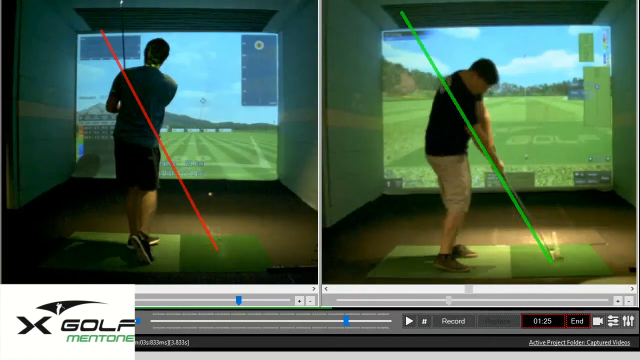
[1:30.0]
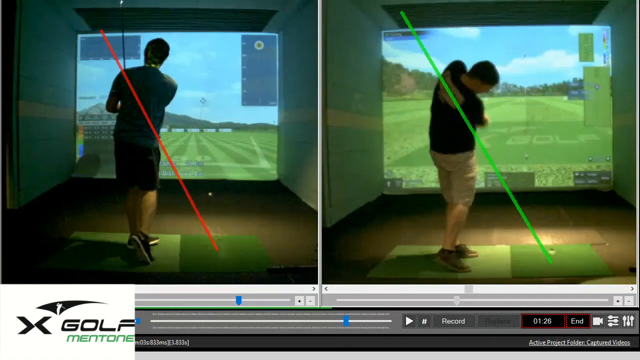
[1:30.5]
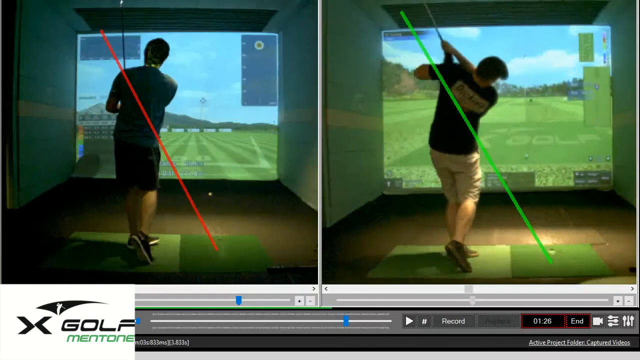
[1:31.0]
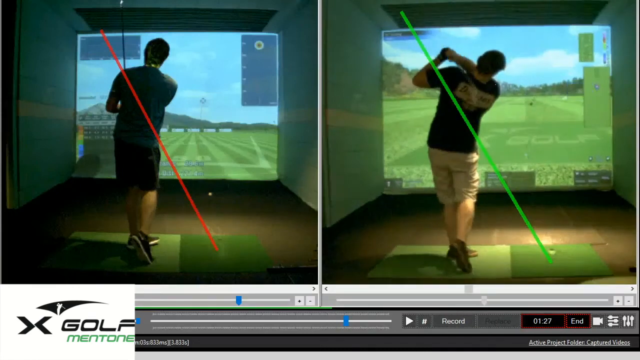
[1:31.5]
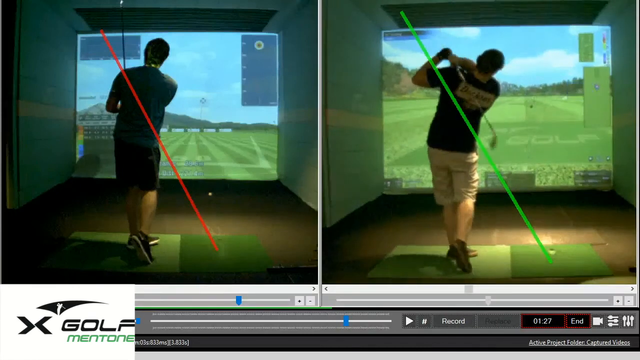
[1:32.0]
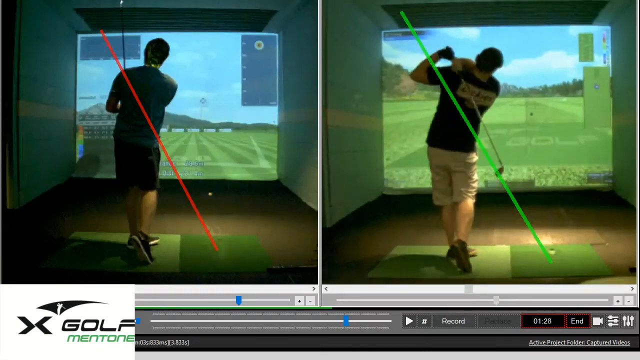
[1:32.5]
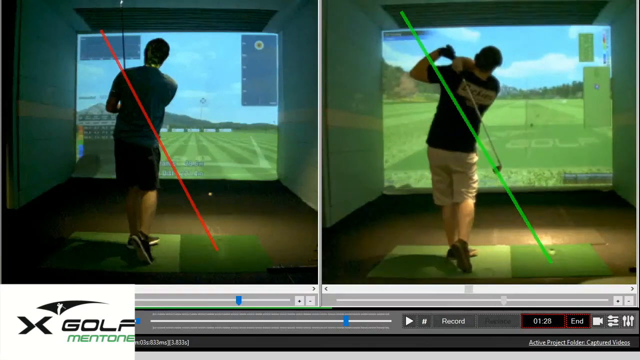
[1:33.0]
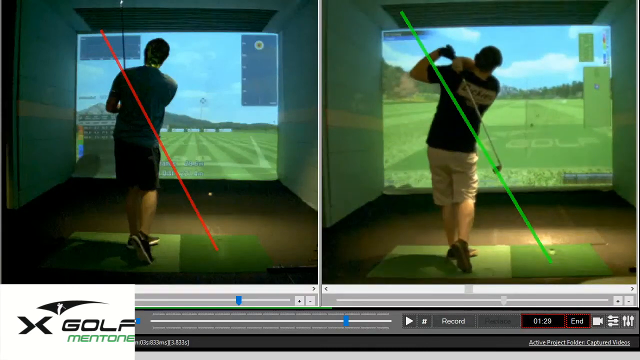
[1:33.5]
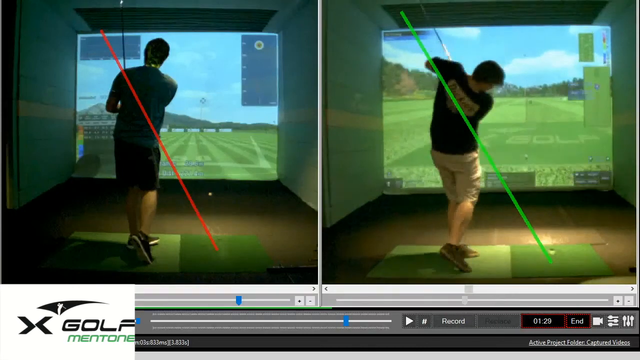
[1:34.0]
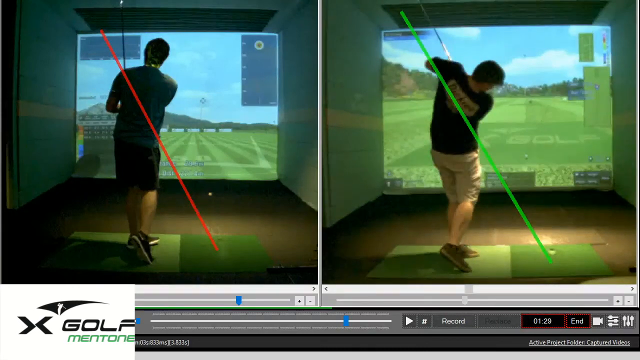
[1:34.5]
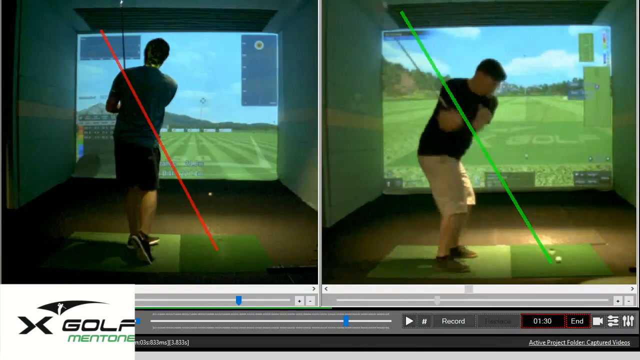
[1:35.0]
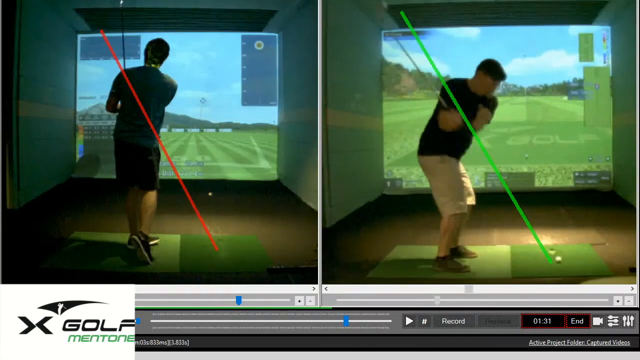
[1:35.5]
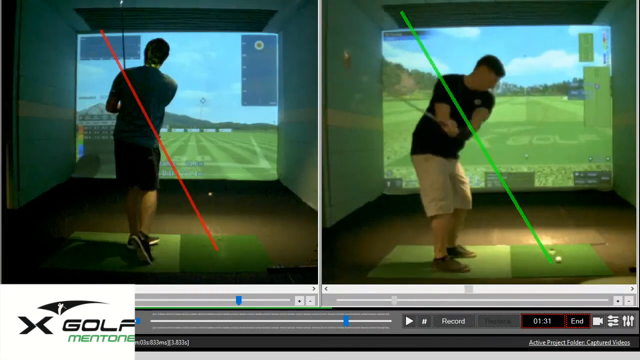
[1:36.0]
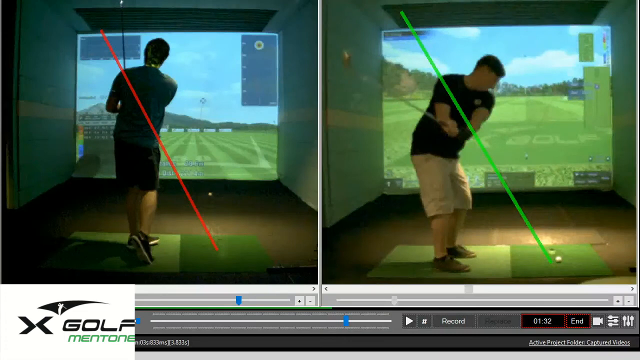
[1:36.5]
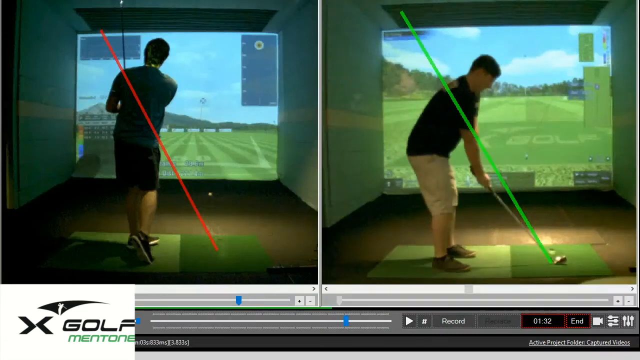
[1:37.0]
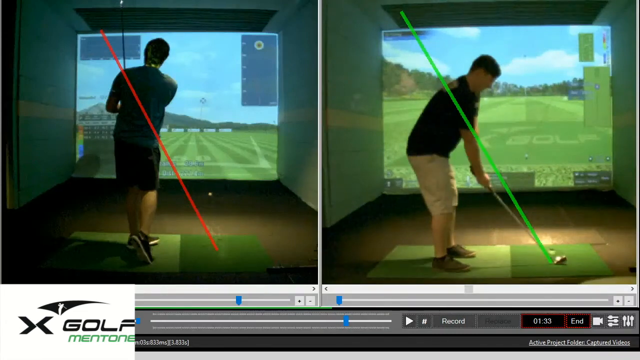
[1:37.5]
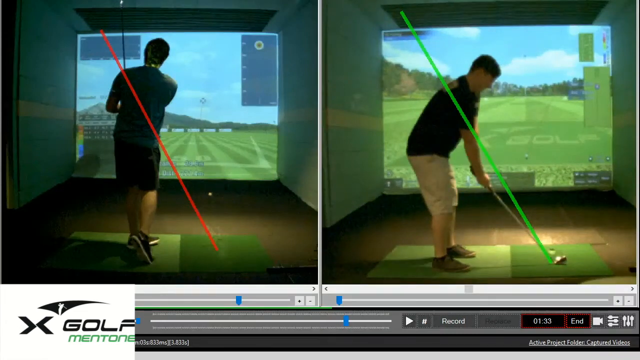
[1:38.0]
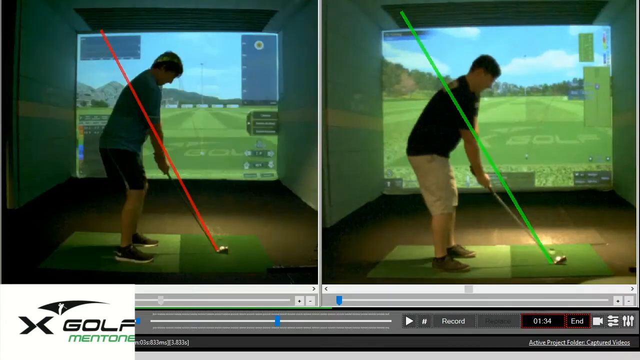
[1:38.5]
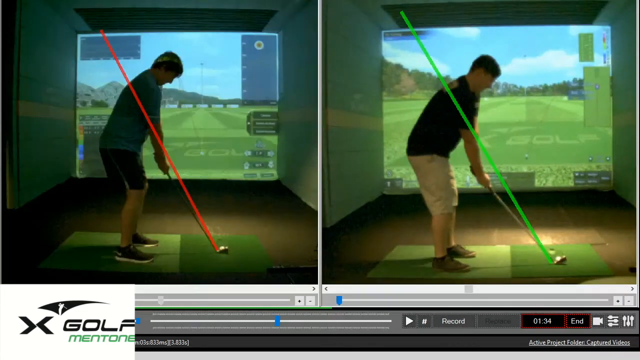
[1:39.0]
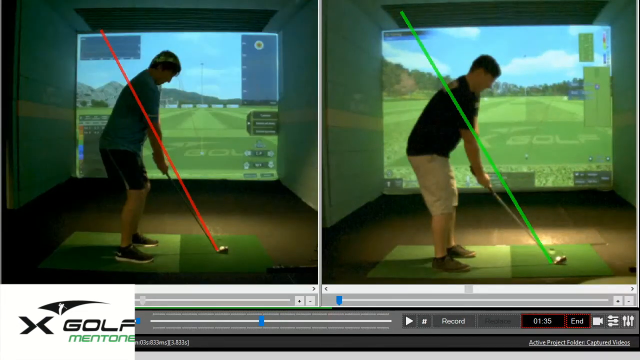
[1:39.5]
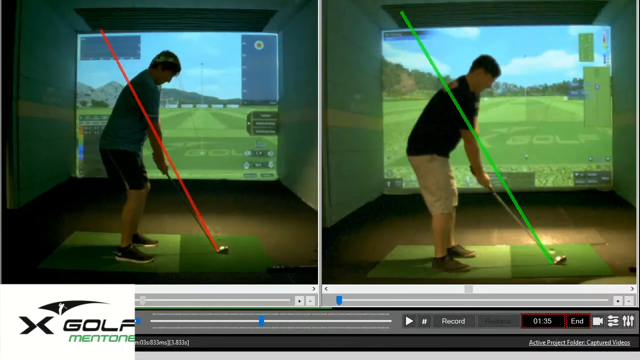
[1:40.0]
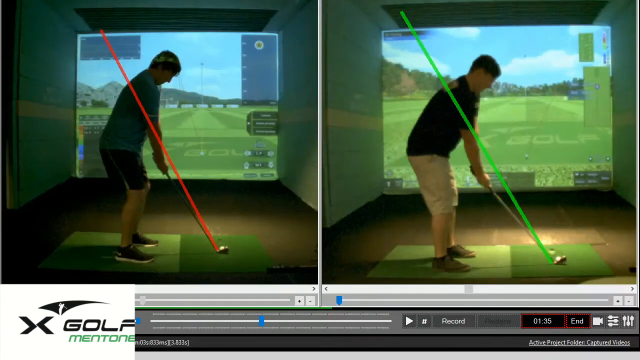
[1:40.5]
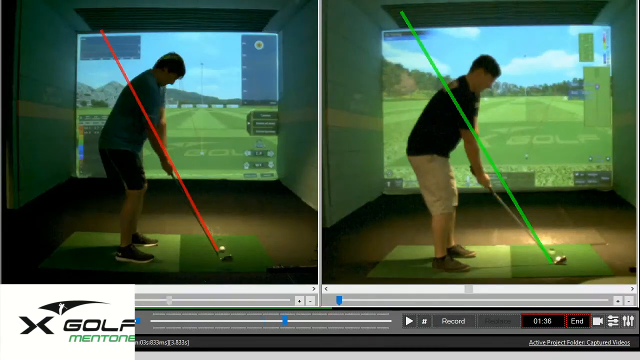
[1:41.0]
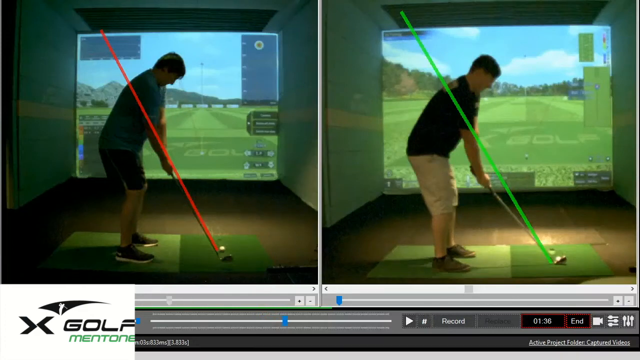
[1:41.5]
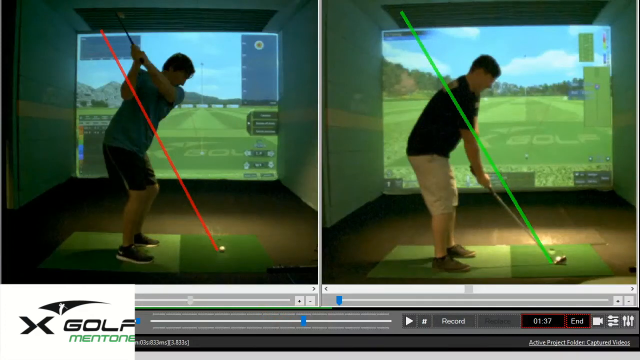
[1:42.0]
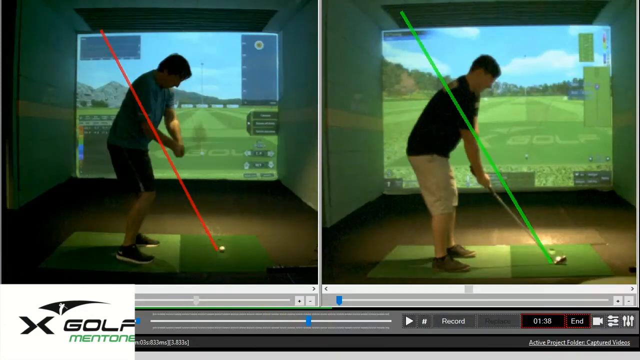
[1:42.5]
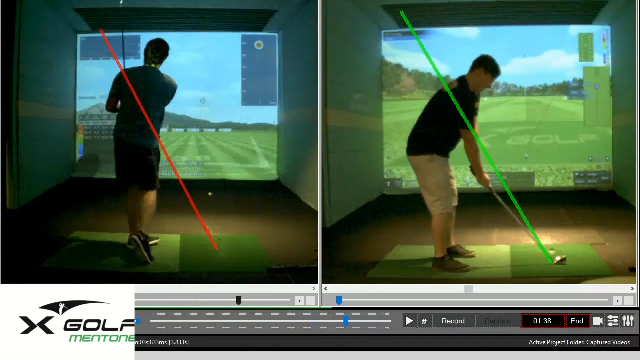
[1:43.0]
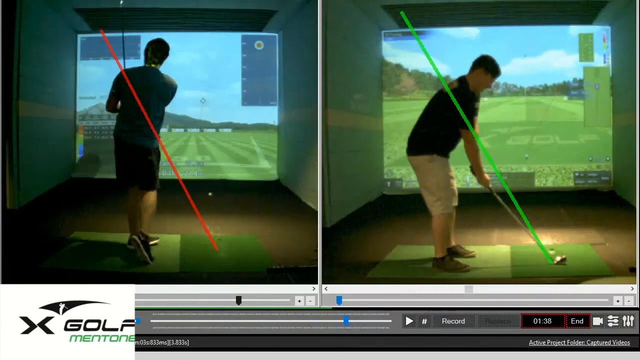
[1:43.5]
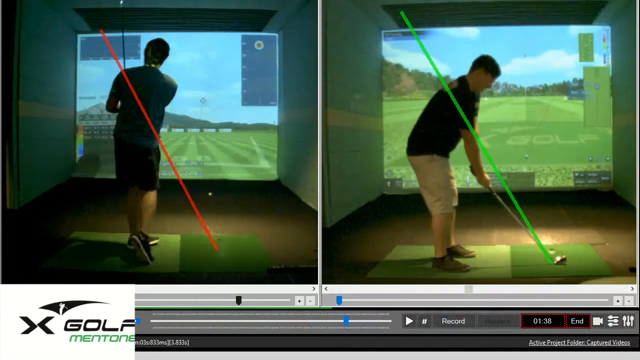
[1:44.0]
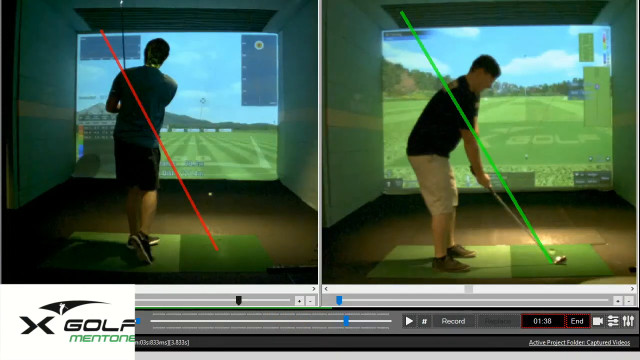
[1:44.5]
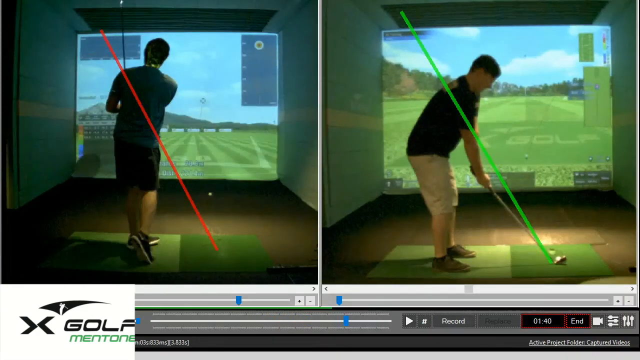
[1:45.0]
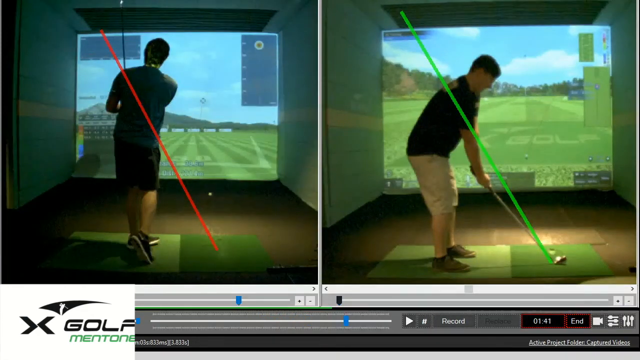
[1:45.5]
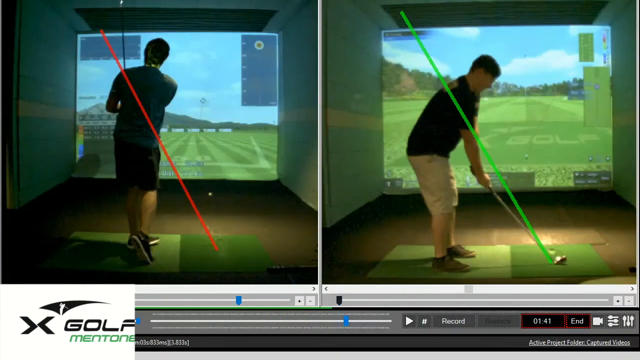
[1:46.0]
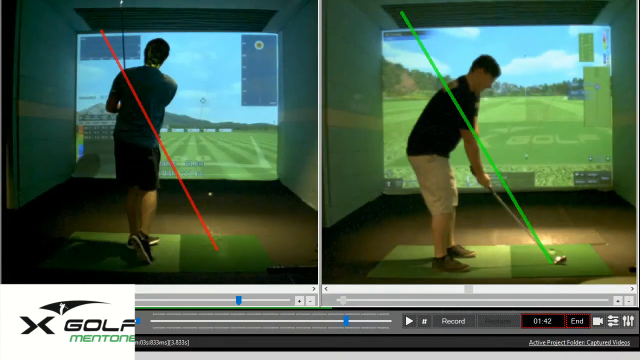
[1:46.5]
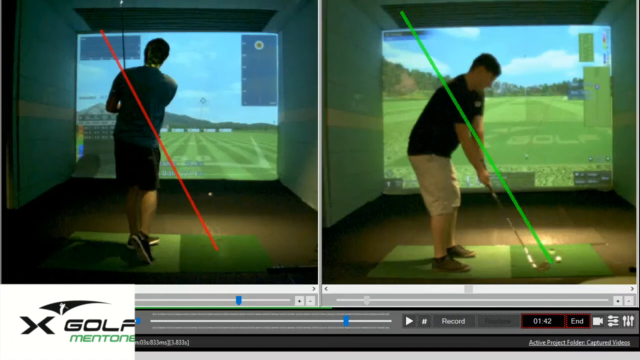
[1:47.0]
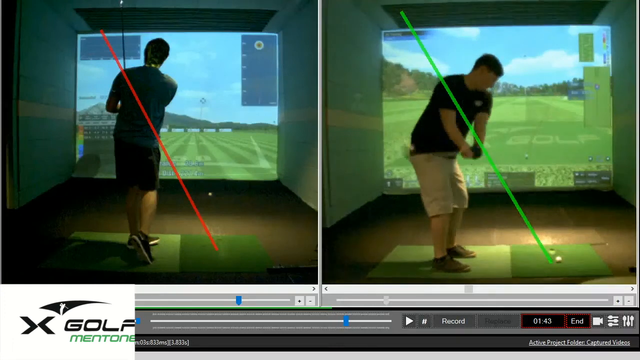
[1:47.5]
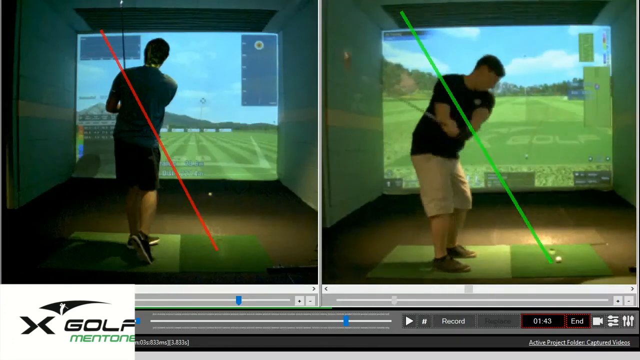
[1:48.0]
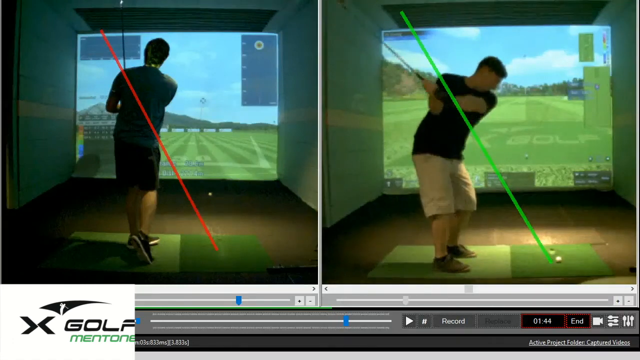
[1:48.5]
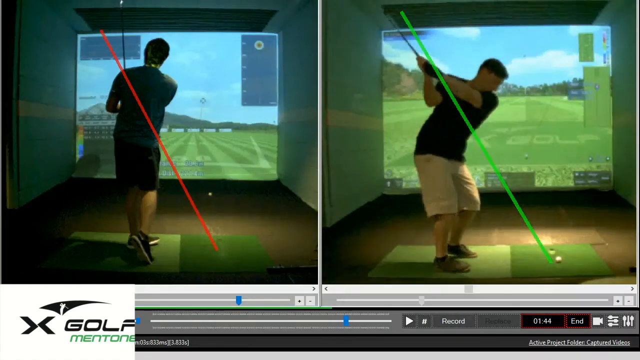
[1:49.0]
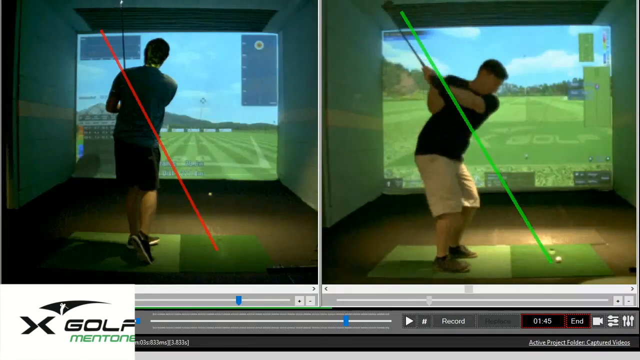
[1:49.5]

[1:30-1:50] The split-screen effect continues. As the golfer on the left swings his club, a red line goes through the graphic, indicating incorrect form; as the golfer on the right swings, a green line goes through the middle, indicating correct form. In the lower left-hand corner are the company name, X-Golf Mentone, and its black, white and green logo, whose white part shows someone with a golf club. Controls for the app or computer program include a record button, a timer and an end button, and text at the bottom reads "Active Project Folder, Videos."